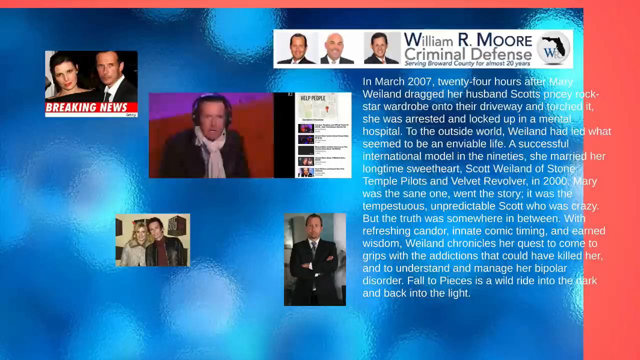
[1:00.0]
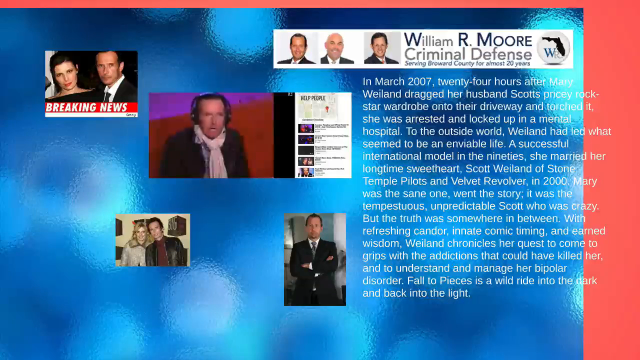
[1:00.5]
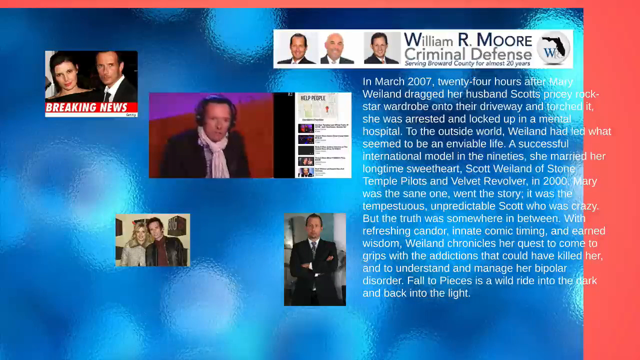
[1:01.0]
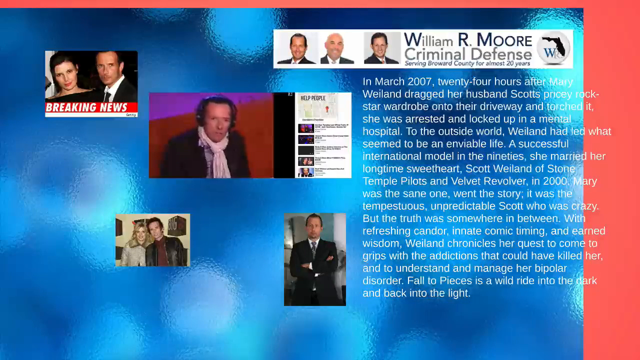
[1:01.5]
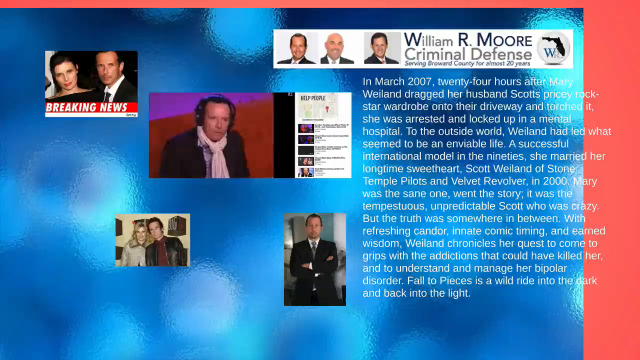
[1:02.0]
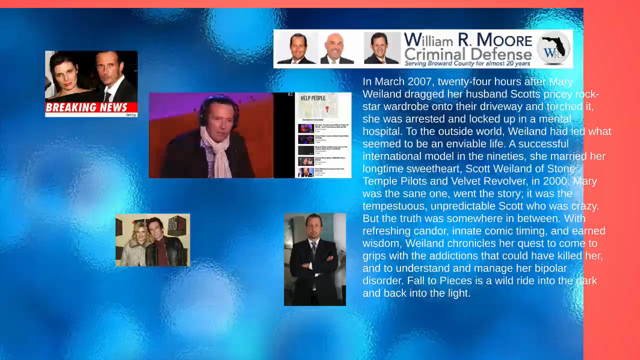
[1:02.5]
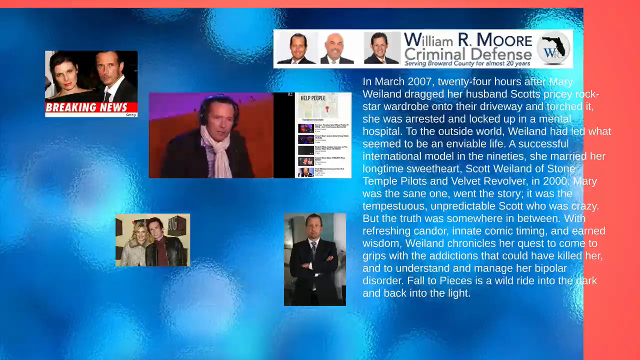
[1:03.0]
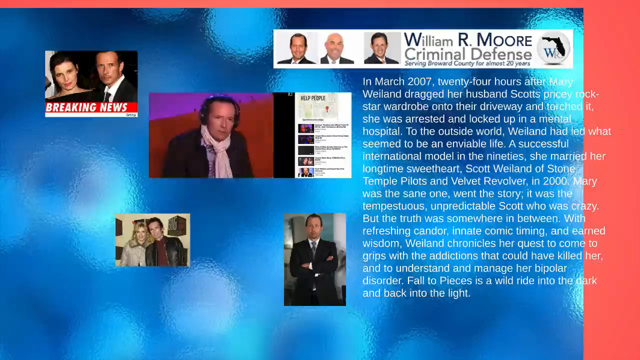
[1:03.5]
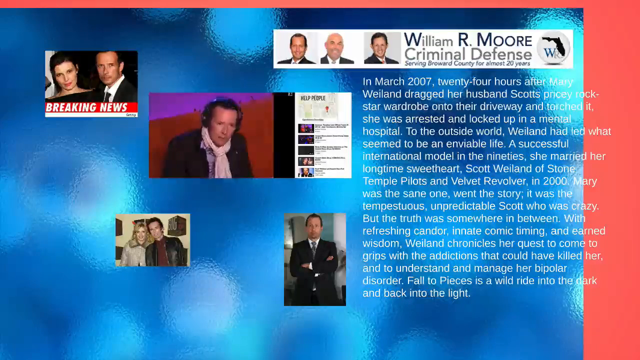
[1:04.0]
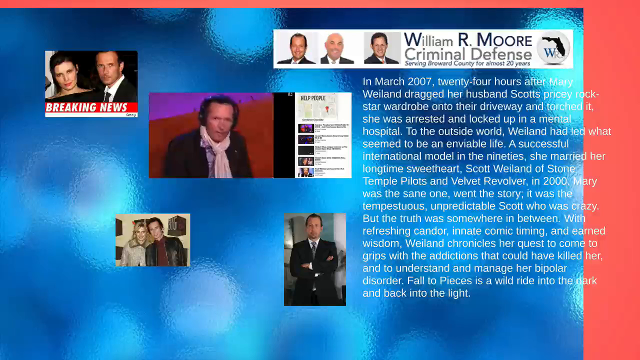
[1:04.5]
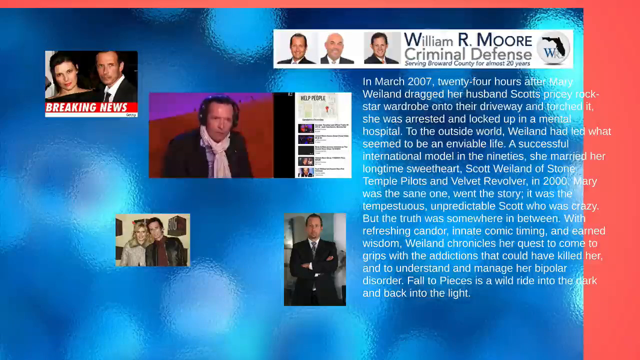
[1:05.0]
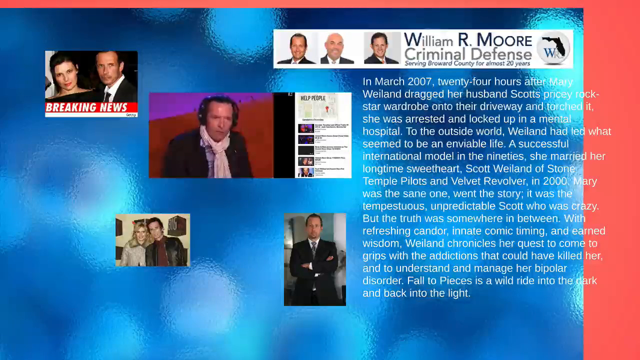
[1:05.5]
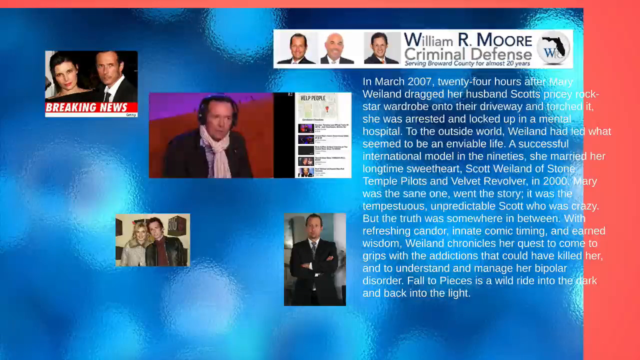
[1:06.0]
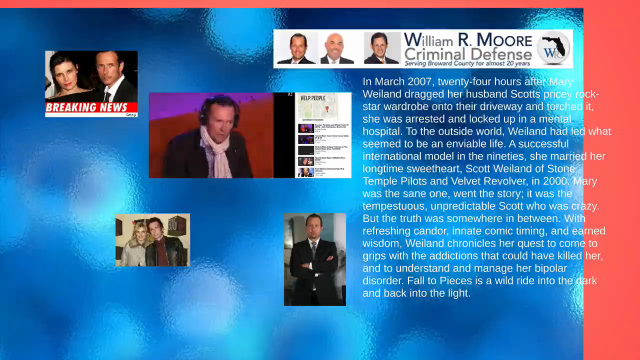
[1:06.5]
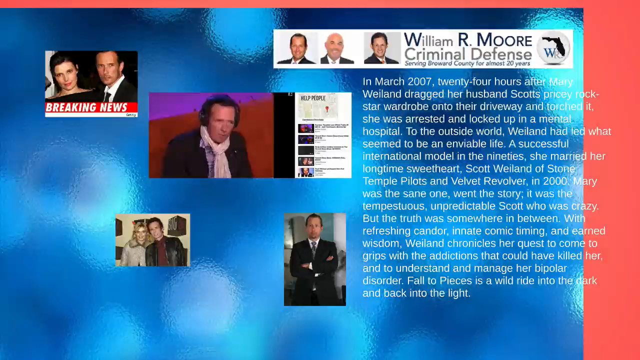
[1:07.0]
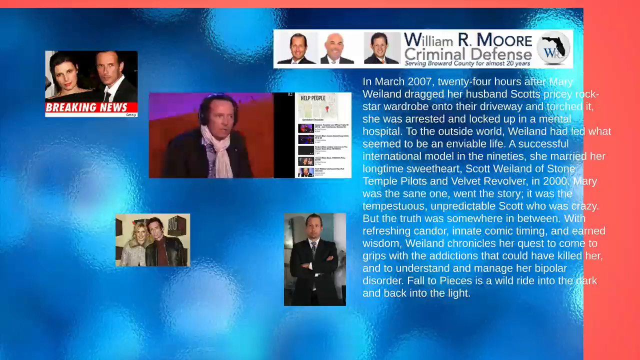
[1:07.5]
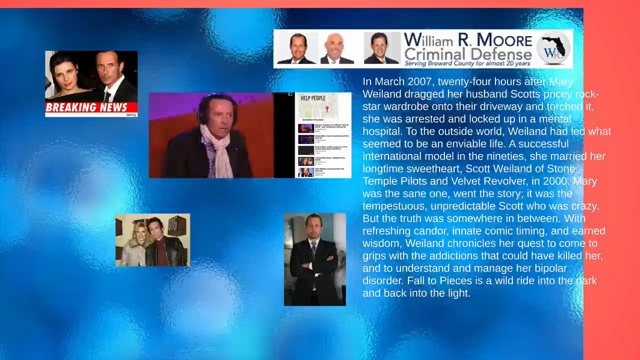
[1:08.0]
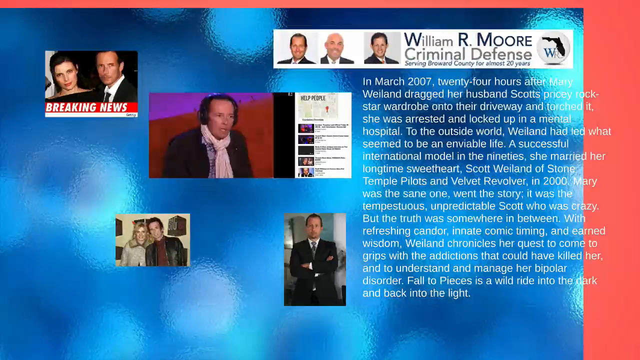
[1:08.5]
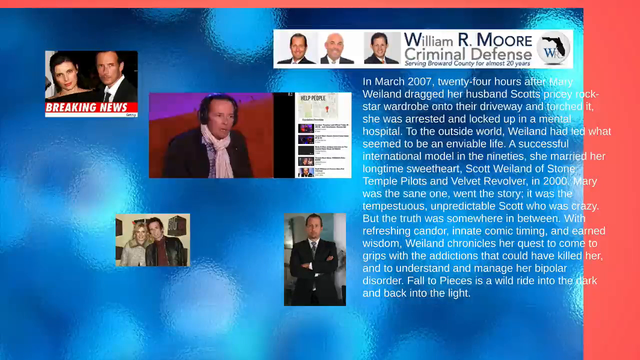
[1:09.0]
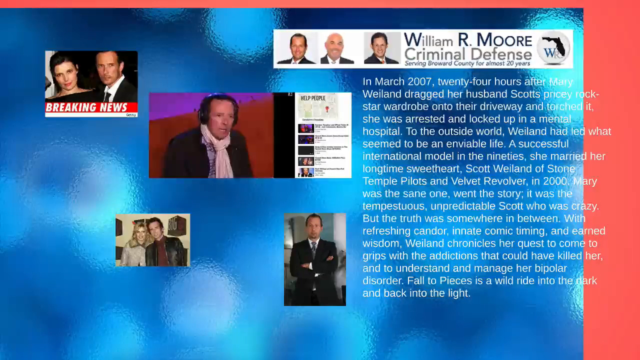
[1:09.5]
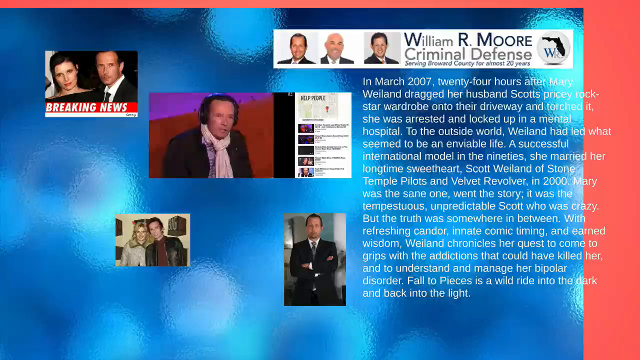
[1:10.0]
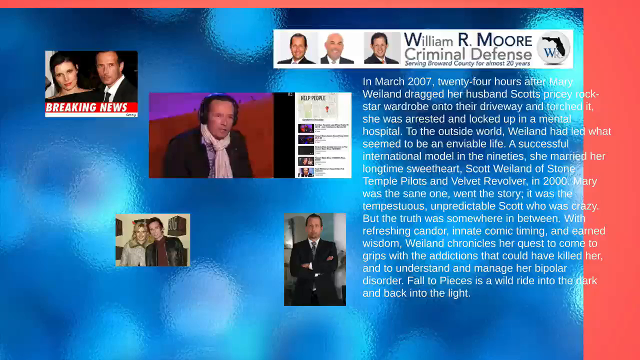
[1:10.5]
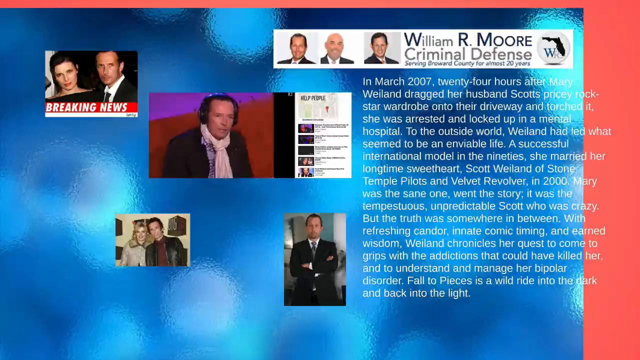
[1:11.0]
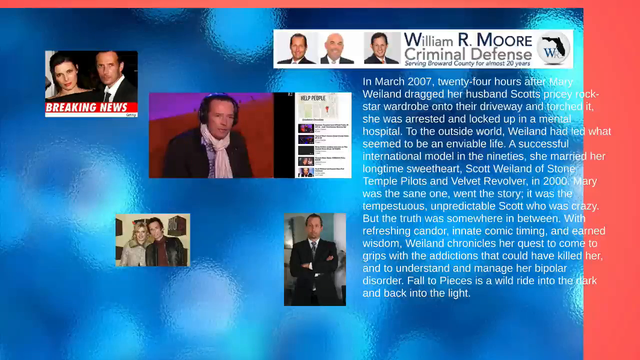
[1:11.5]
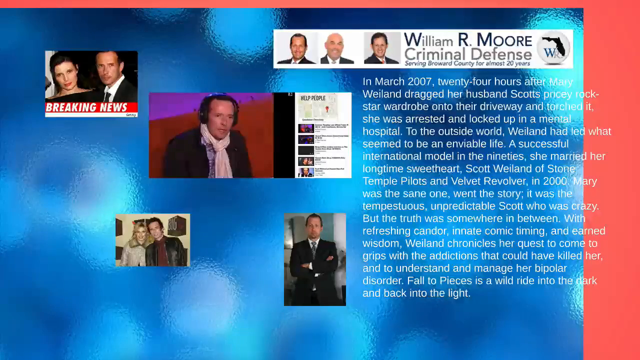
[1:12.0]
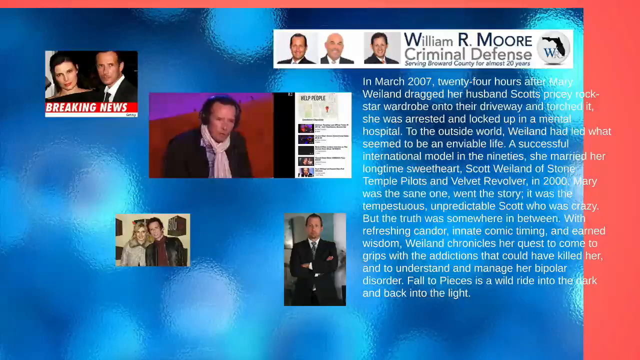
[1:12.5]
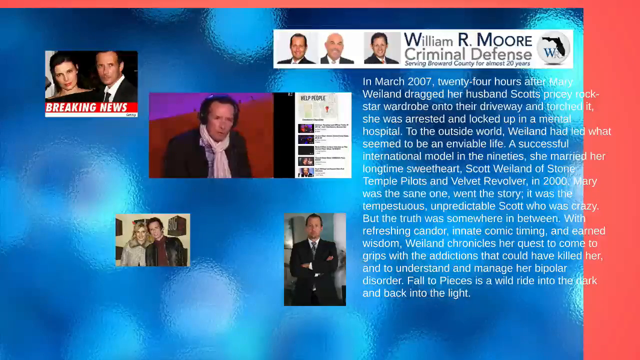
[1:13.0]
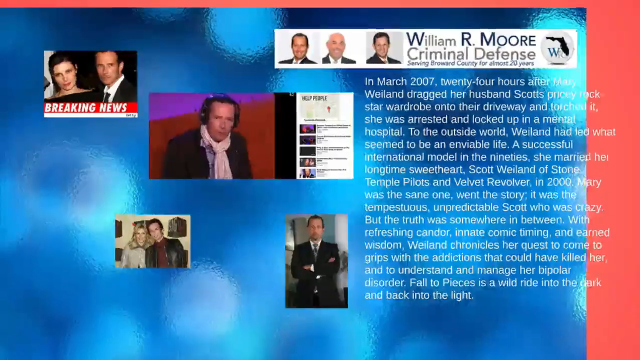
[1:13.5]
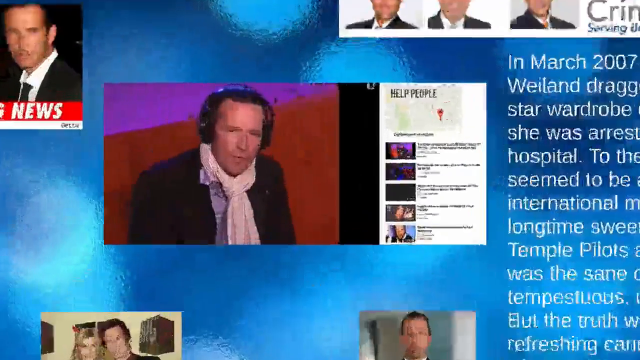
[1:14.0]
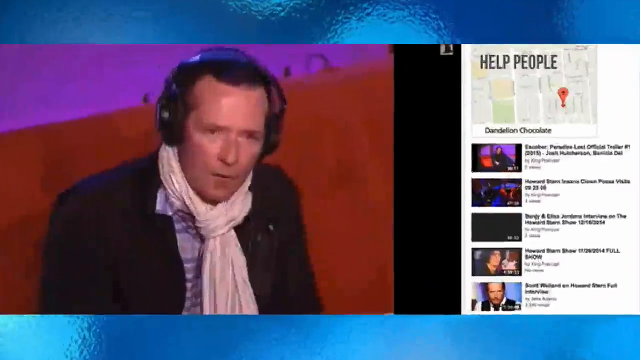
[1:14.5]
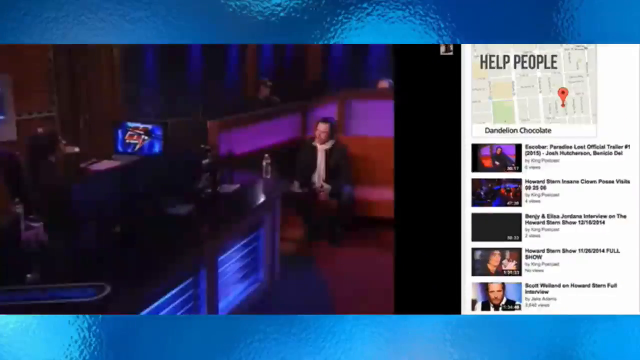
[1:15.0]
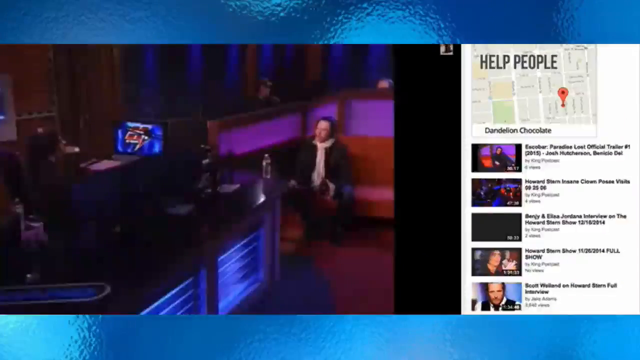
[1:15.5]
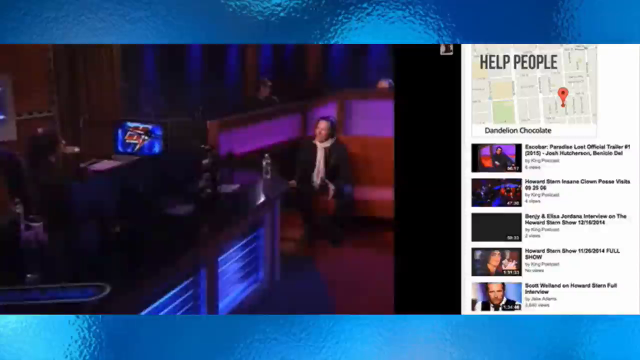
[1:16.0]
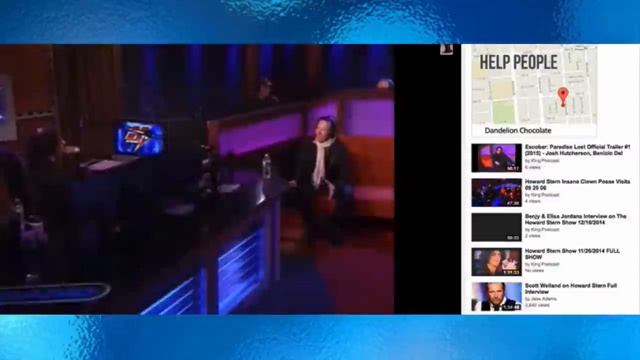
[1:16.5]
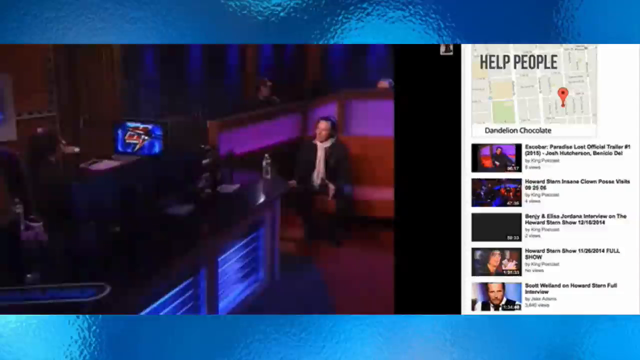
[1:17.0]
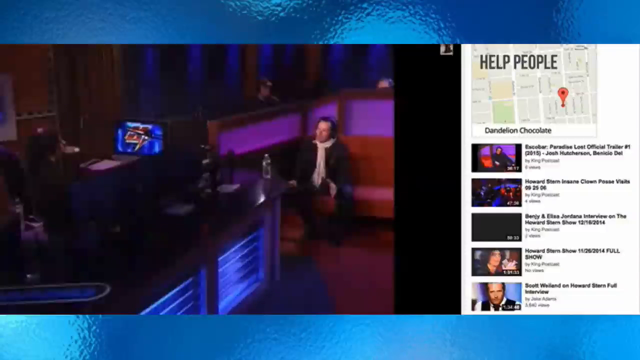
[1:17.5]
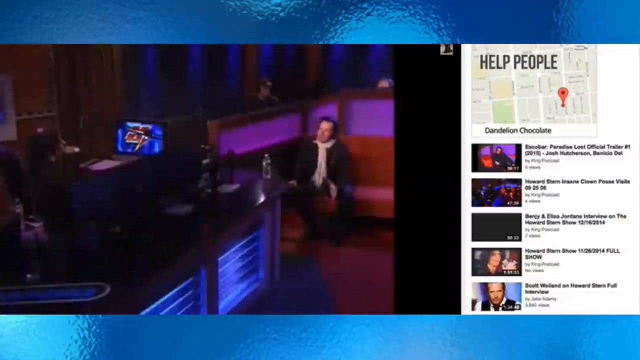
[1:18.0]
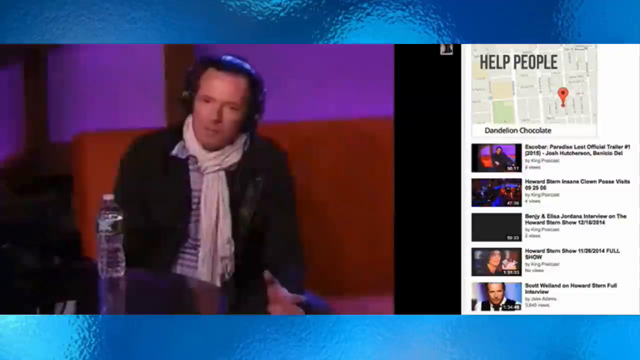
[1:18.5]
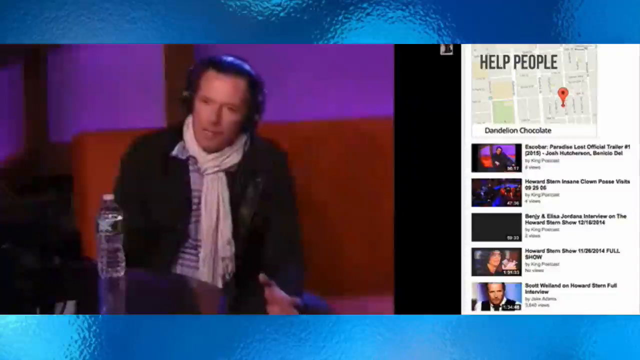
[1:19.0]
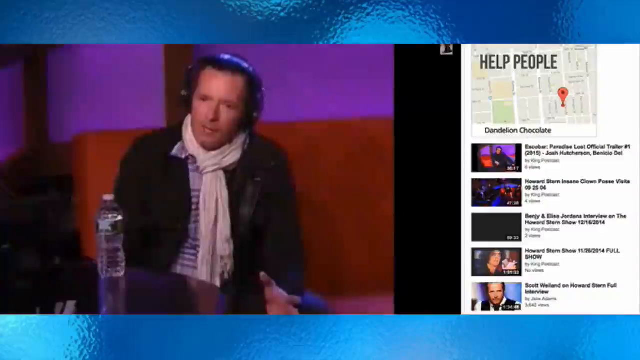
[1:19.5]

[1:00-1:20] The view zooms in on the same video as the man continues talking. He sits on a red couch, with a wooden cabinet and an FM radio on the side, and wears headphones with a microphone as he talks. The article text alongside mentions "Stone Temple Pilots" and a report in 2000, and includes the line "the truth was somewhat in between." The article is shown while the person talks in a YouTube video.